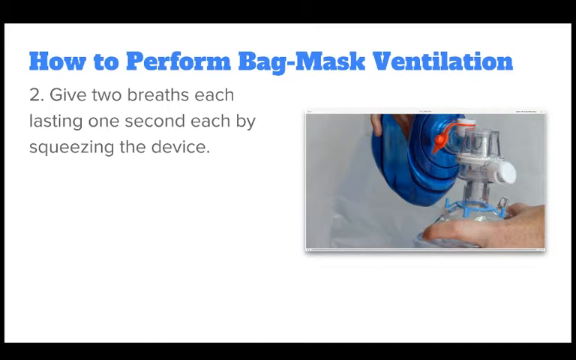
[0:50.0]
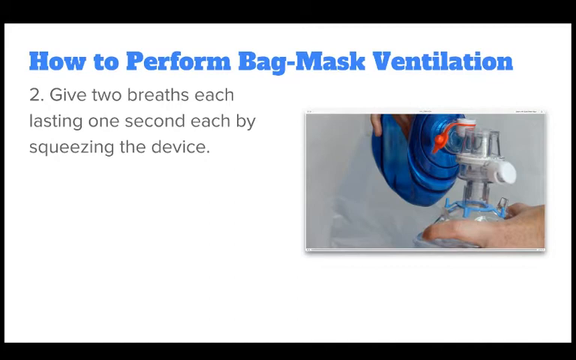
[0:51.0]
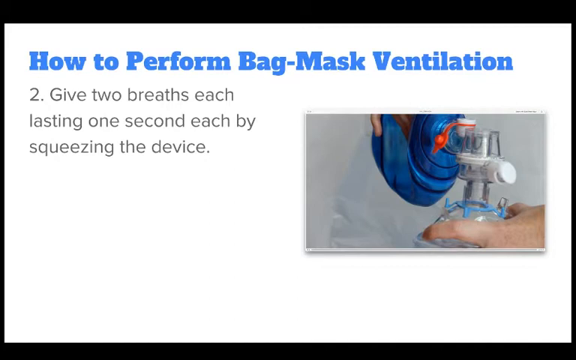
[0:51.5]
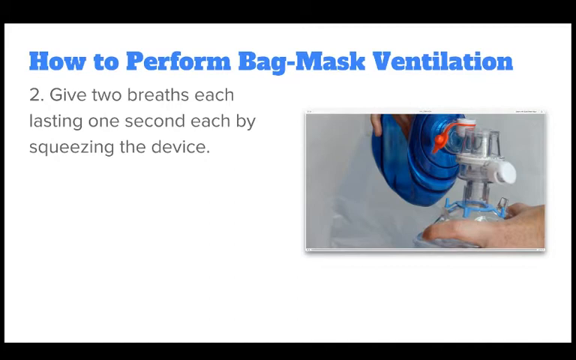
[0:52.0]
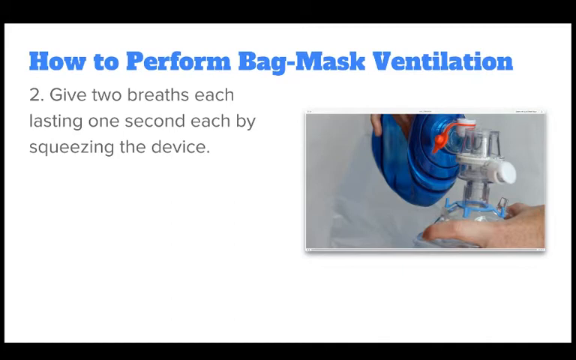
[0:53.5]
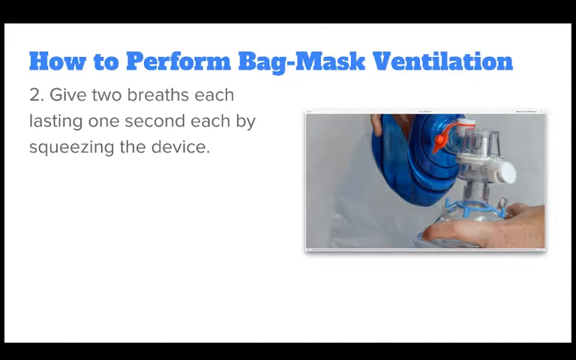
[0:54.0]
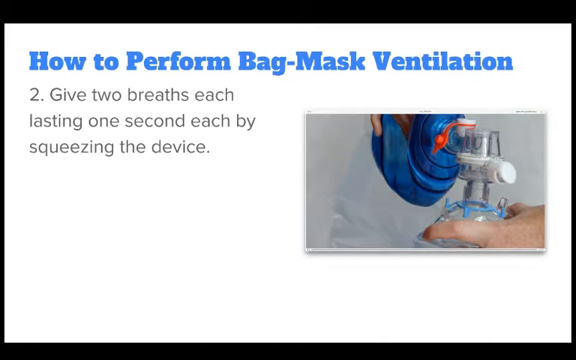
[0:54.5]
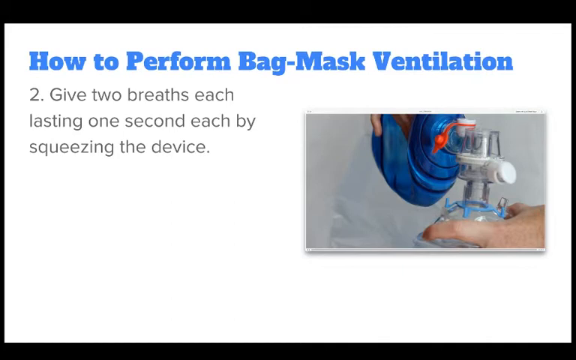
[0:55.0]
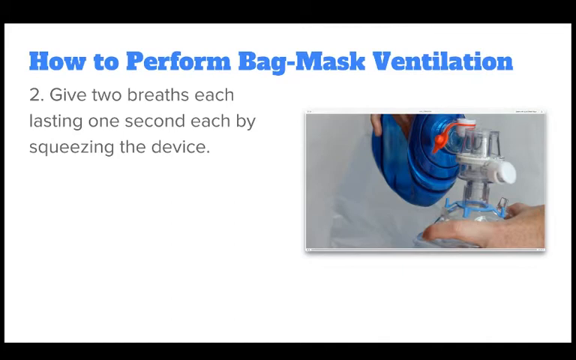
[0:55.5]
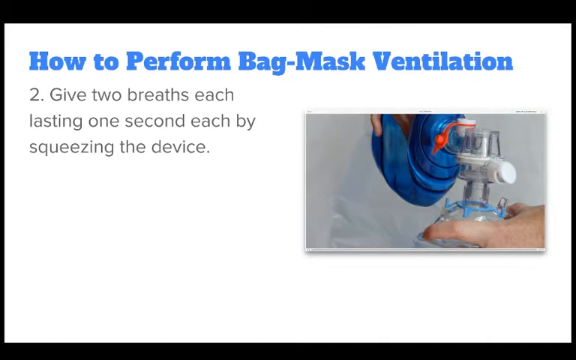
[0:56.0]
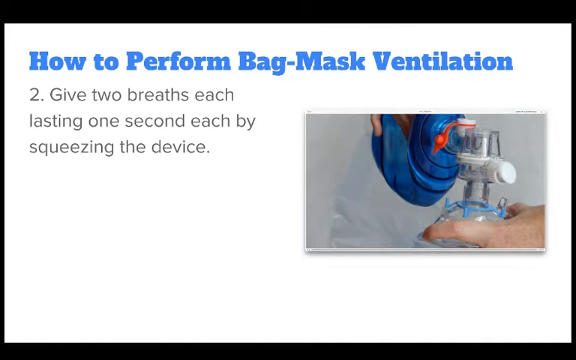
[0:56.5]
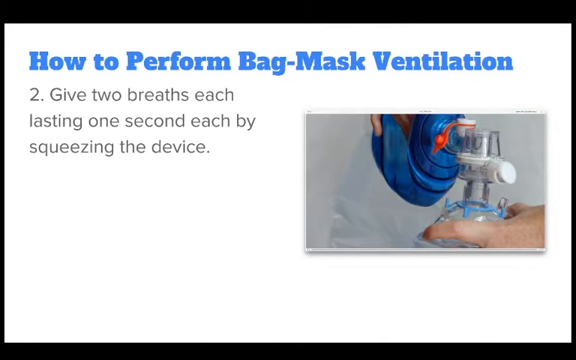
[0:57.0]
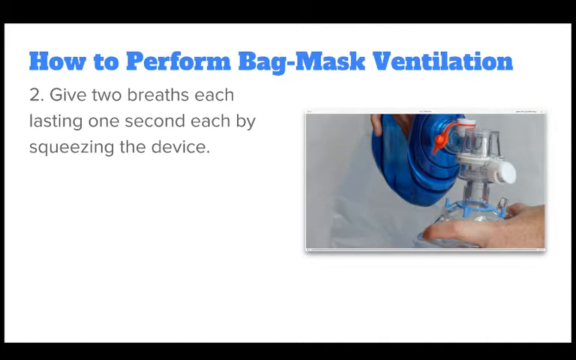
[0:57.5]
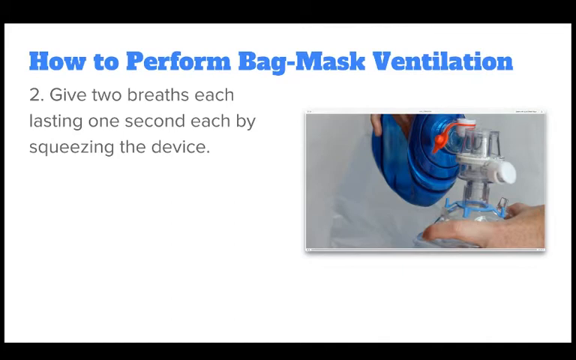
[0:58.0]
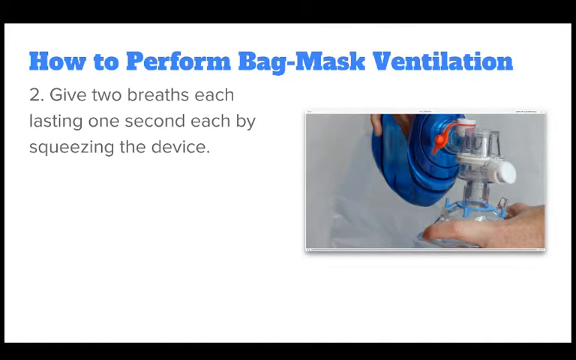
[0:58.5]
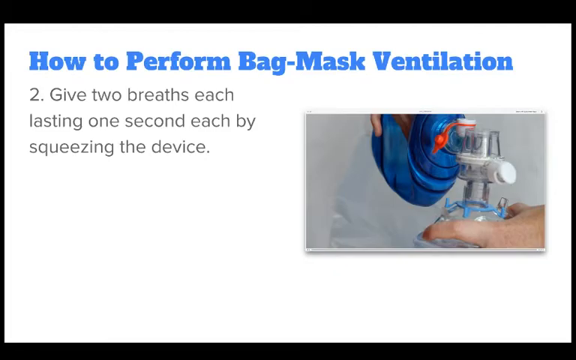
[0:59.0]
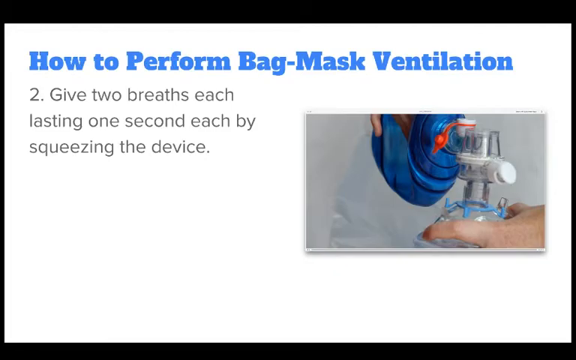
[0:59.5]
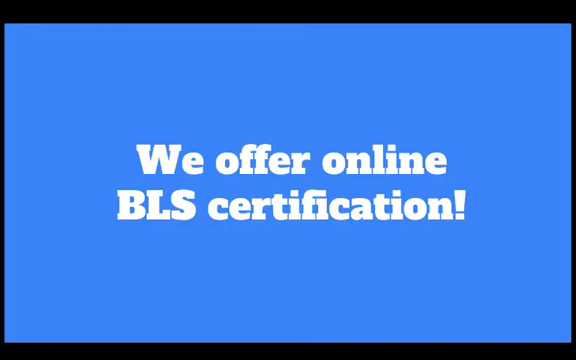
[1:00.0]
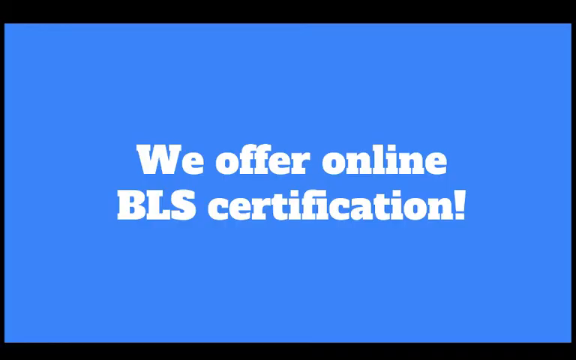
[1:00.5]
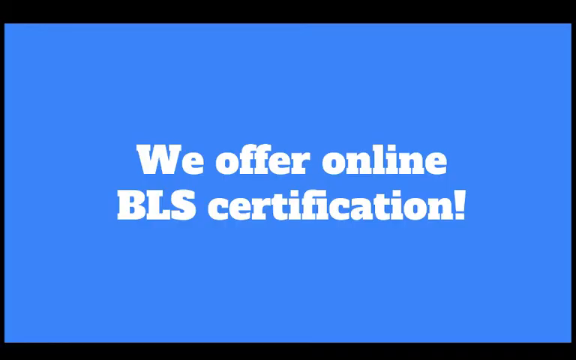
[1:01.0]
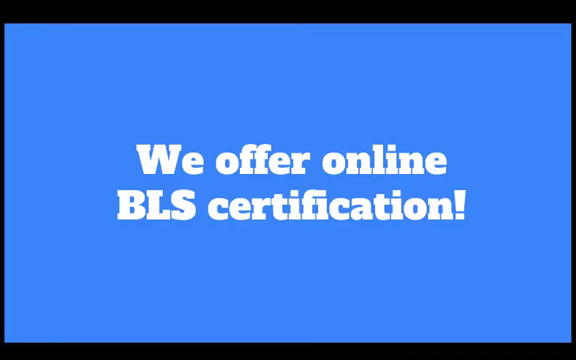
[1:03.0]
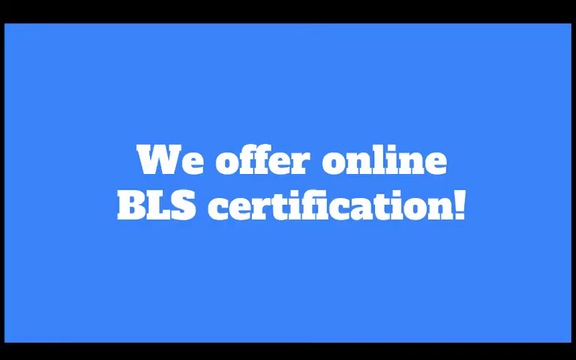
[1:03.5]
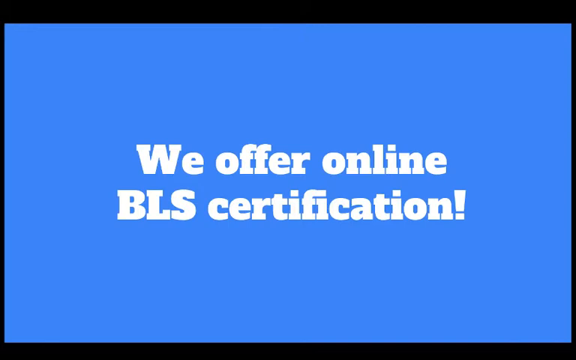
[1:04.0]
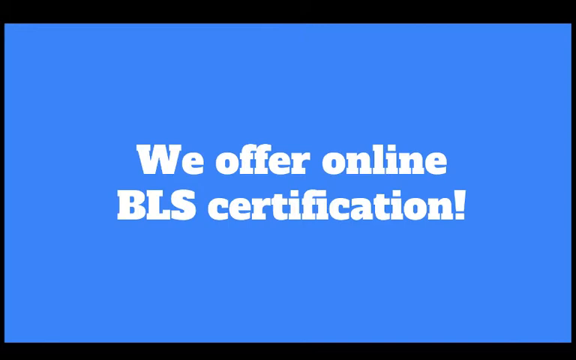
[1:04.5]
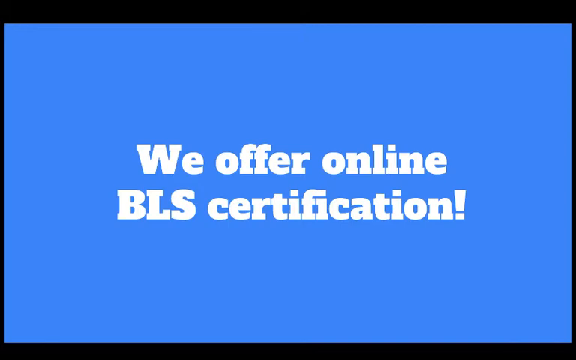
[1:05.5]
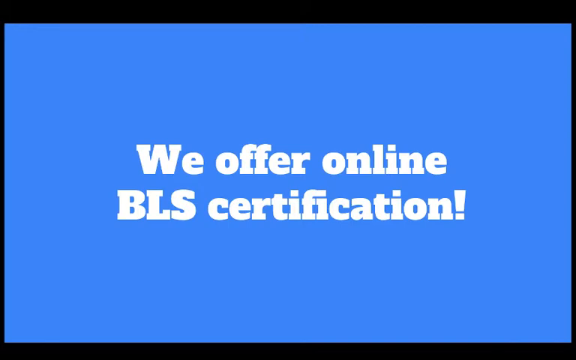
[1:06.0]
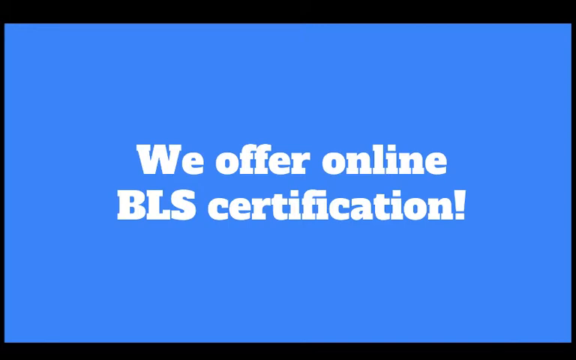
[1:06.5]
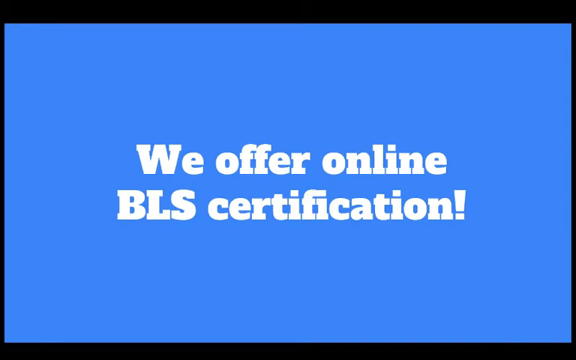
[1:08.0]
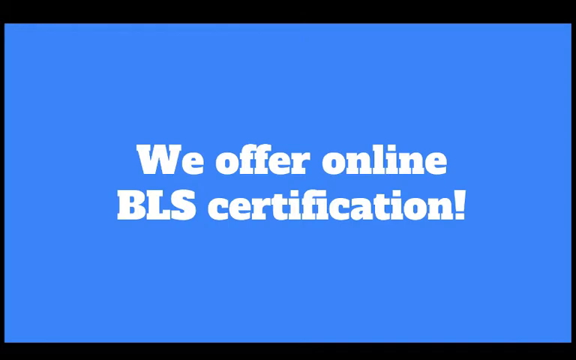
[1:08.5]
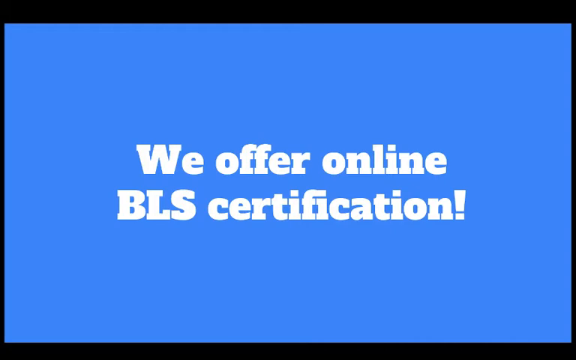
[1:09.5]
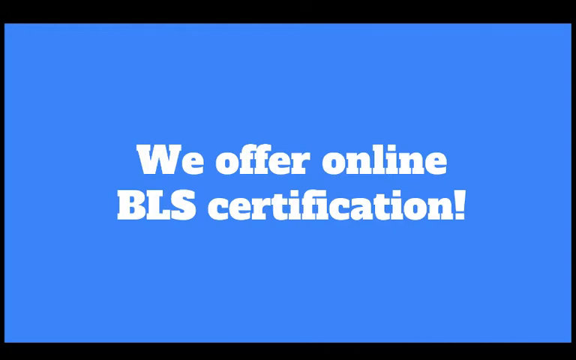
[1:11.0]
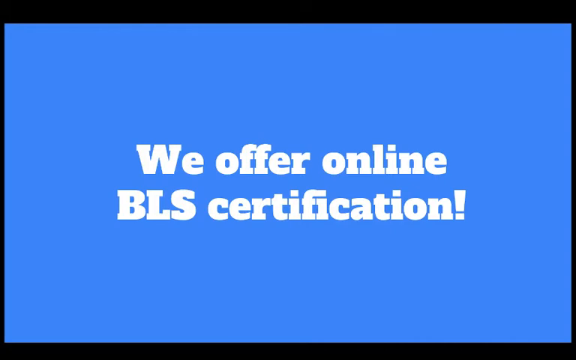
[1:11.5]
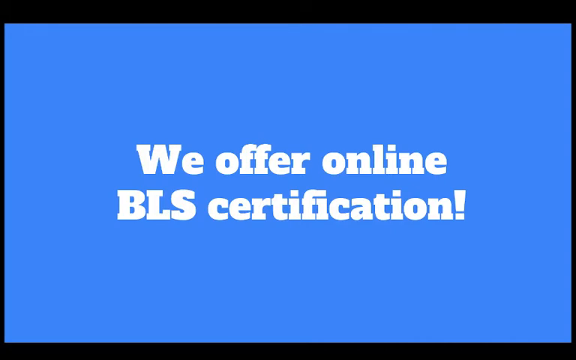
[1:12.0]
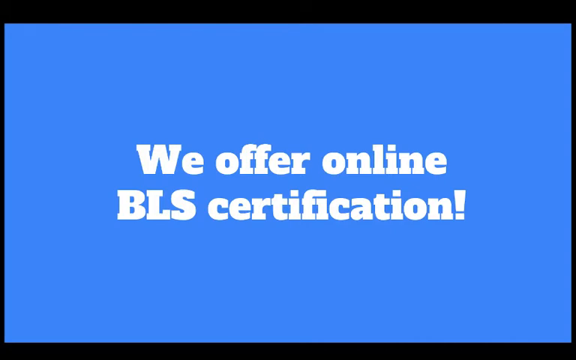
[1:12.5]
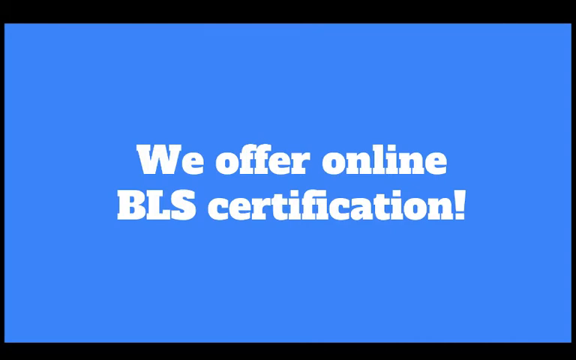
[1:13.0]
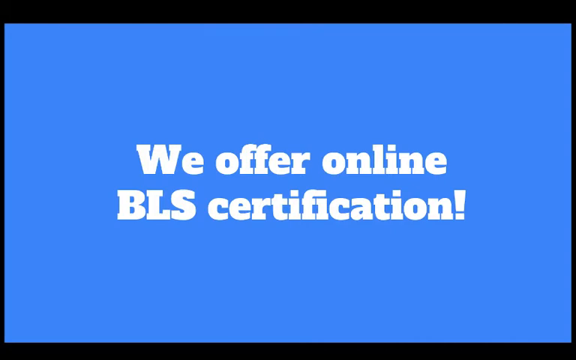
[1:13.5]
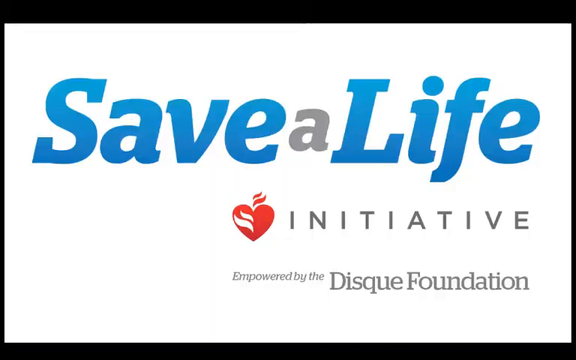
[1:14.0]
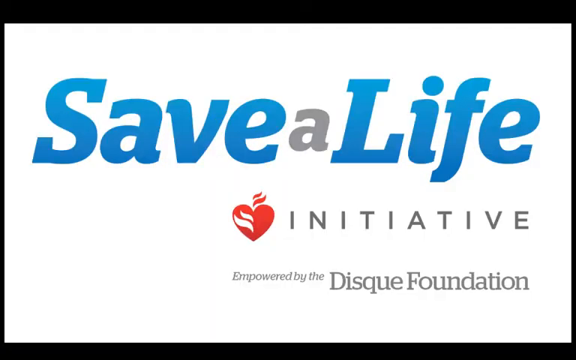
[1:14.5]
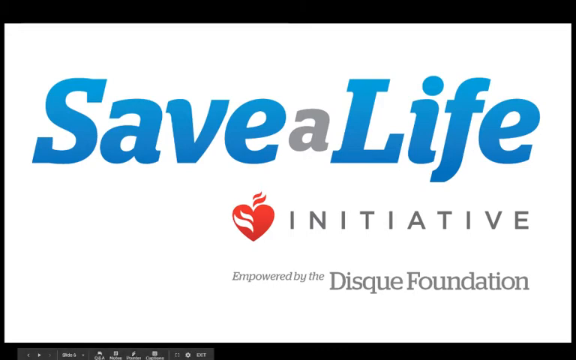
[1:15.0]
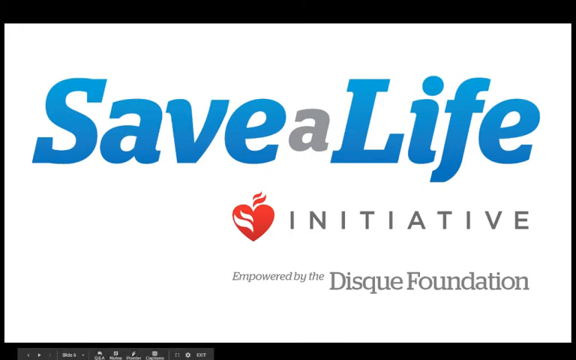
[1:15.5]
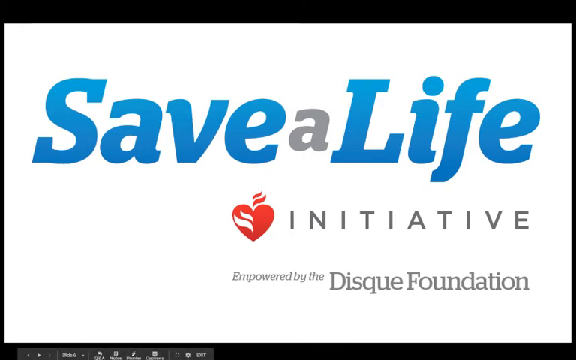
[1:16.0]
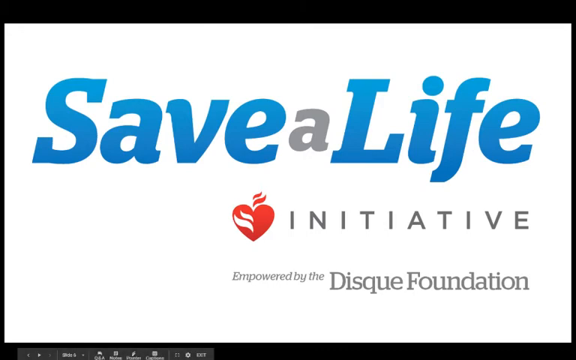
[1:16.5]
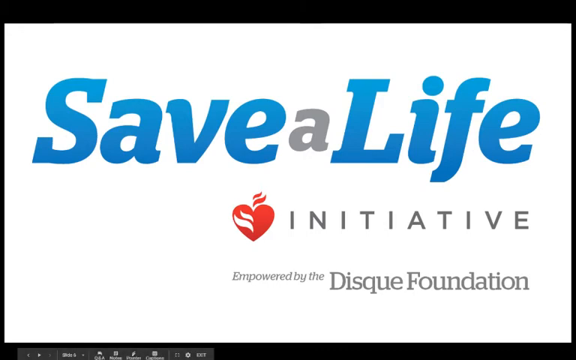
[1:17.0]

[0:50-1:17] The video moves to another screen with a sort of medium to light blue background. In the center, in a fairly strong white font across two lines, it says "We offer online BLS certification!", with BLS in all caps and an exclamation point after "certification". The screen holds for a bit. Next comes a white background with stylized text across the top reading "Save a Life": "Save" and "Life" are in medium blue with a capital S and L, while the smaller "a" between them is gray. Beneath the E, very close to the center of the screen, is a red heart, and to the right of it "INITIATIVE" in gray capitals with the letters spaced fairly far apart. Beneath the heart, in smaller italics, is "Empowered by the", followed to the right in somewhat larger font by "Disque Foundation".